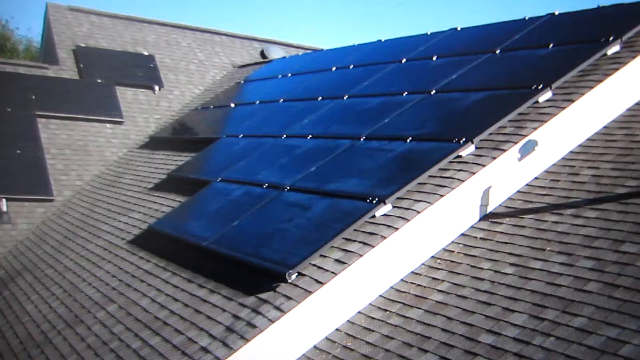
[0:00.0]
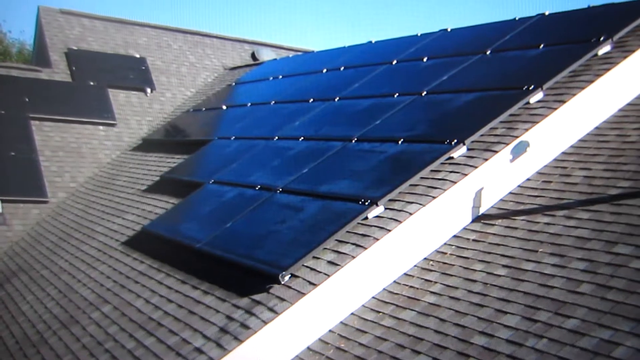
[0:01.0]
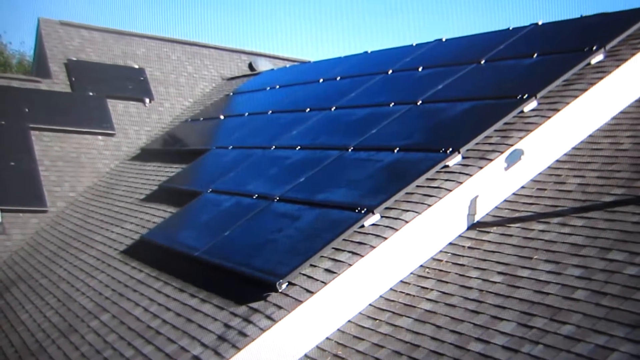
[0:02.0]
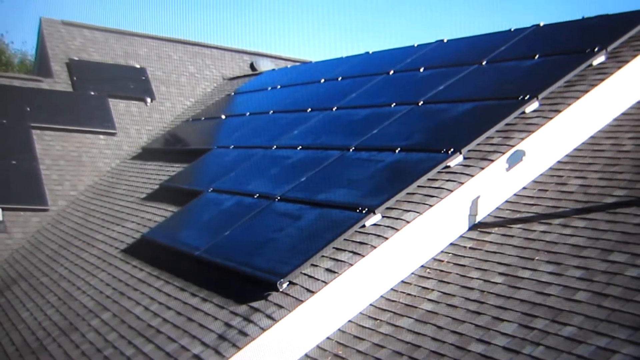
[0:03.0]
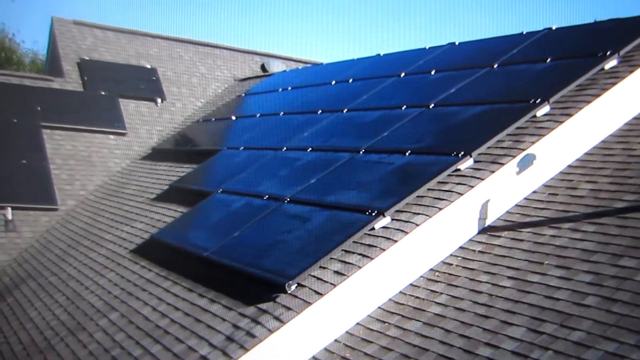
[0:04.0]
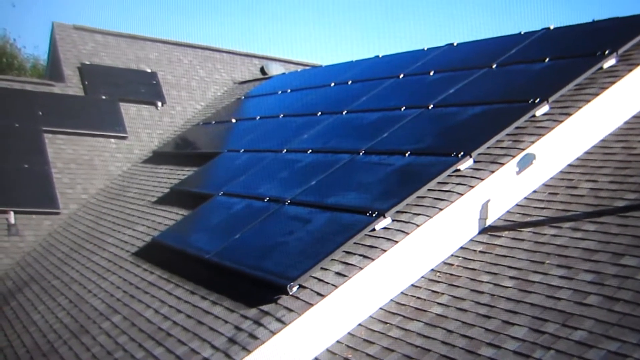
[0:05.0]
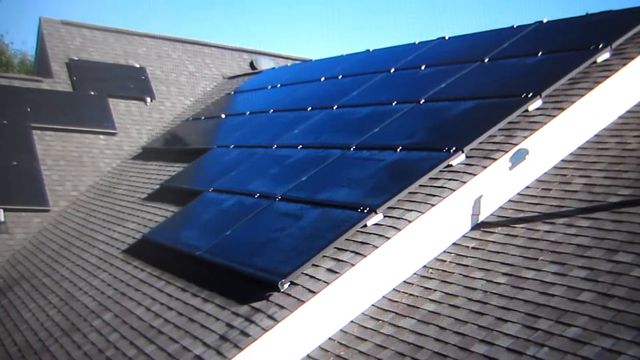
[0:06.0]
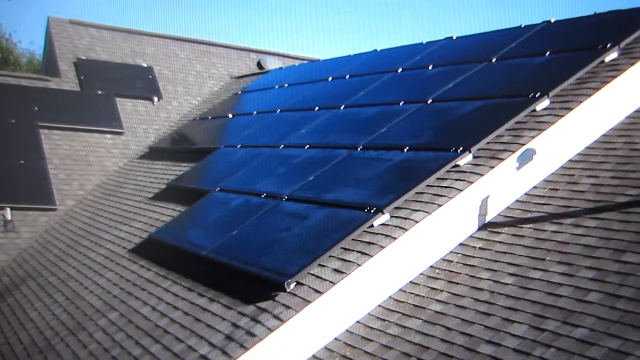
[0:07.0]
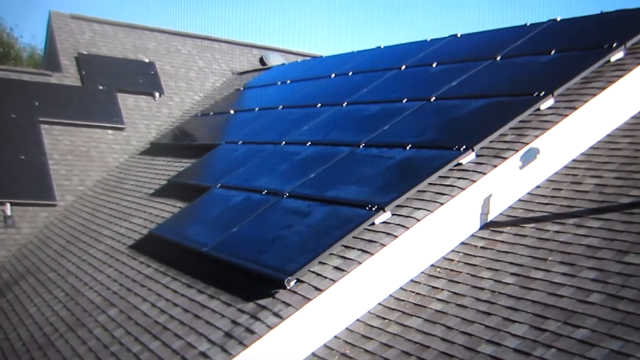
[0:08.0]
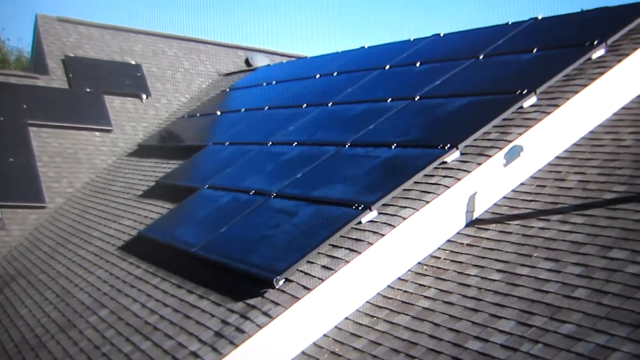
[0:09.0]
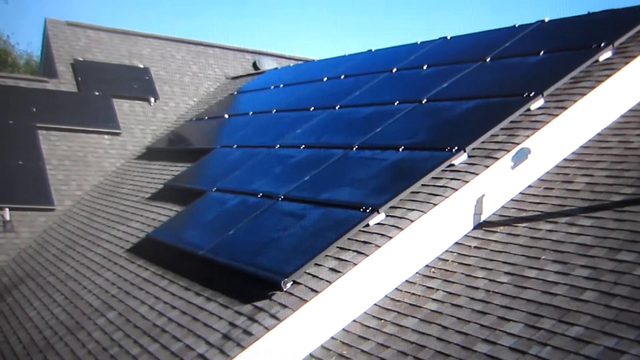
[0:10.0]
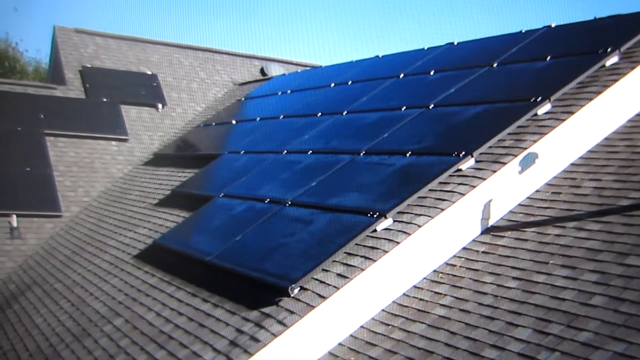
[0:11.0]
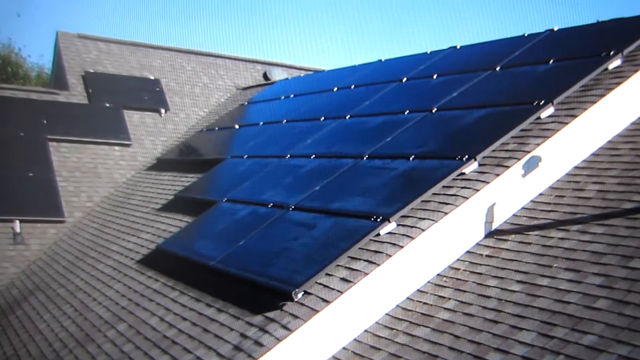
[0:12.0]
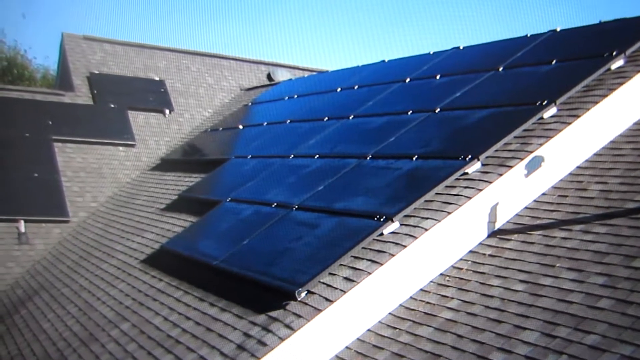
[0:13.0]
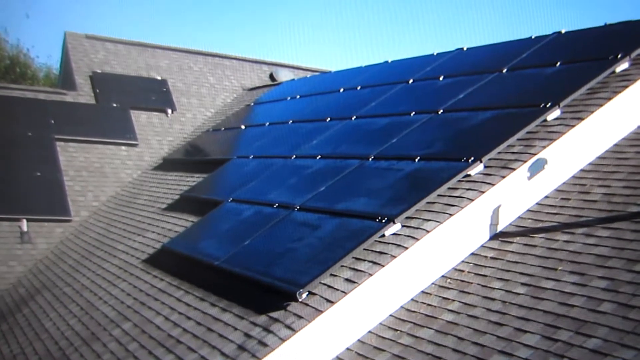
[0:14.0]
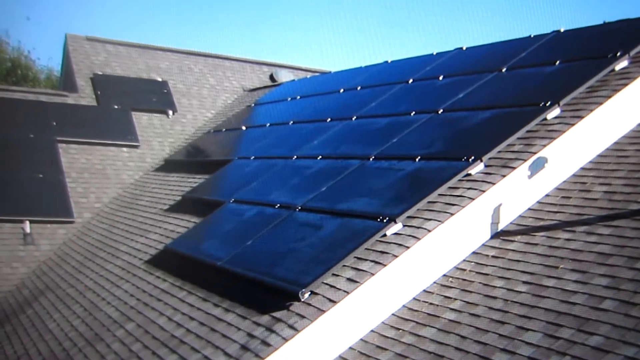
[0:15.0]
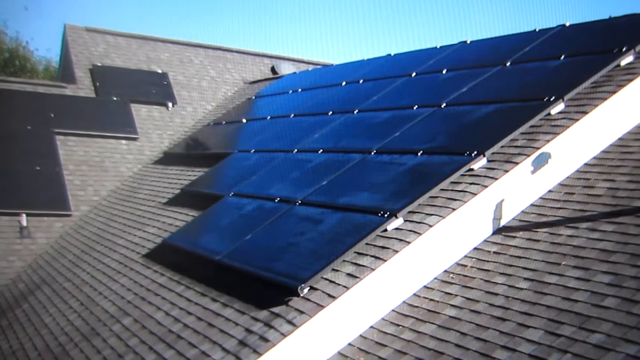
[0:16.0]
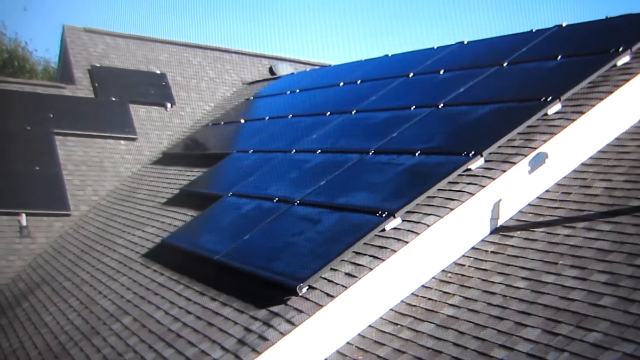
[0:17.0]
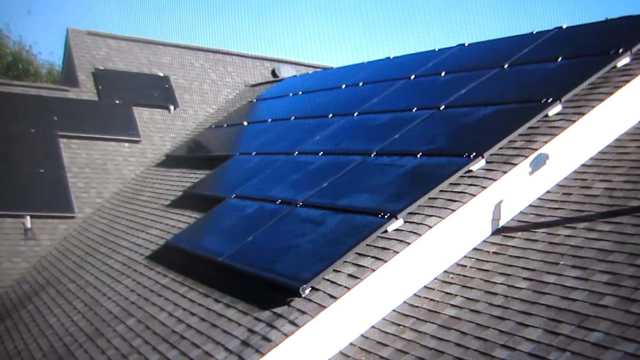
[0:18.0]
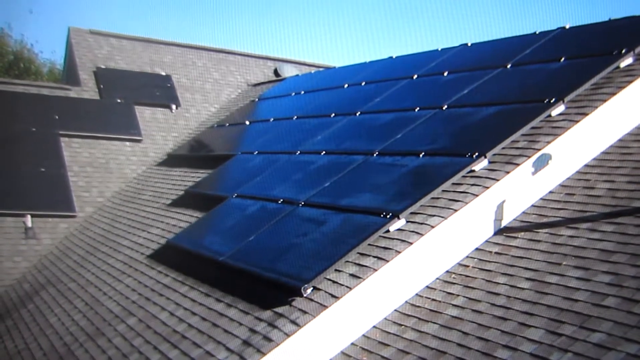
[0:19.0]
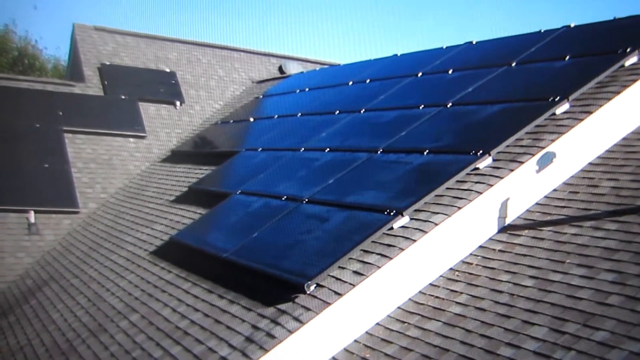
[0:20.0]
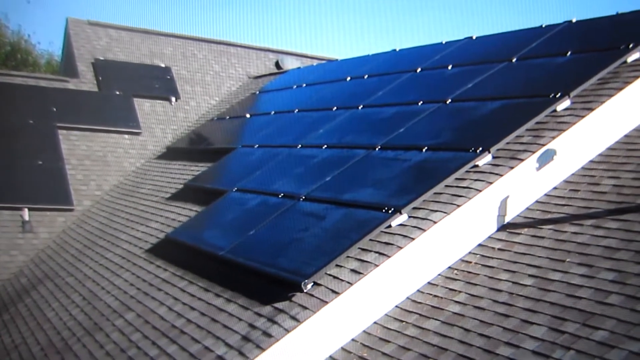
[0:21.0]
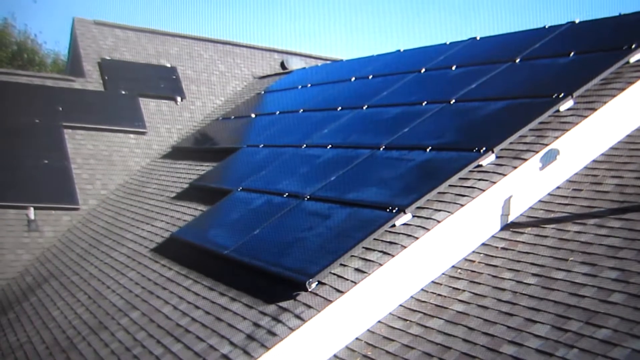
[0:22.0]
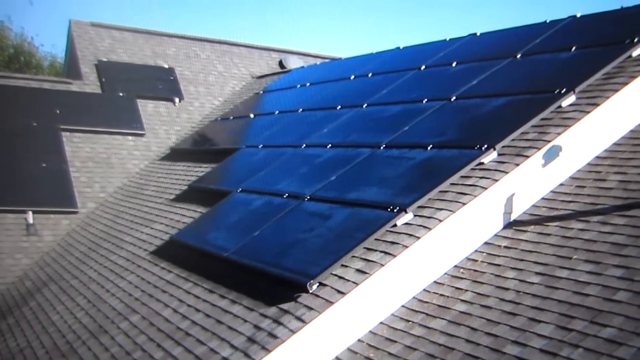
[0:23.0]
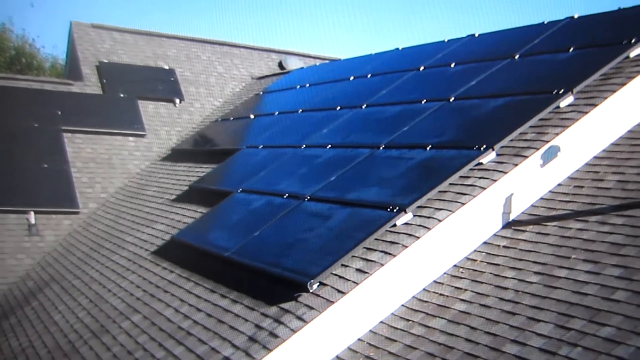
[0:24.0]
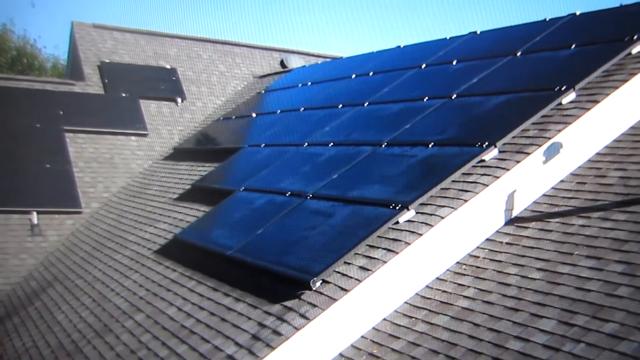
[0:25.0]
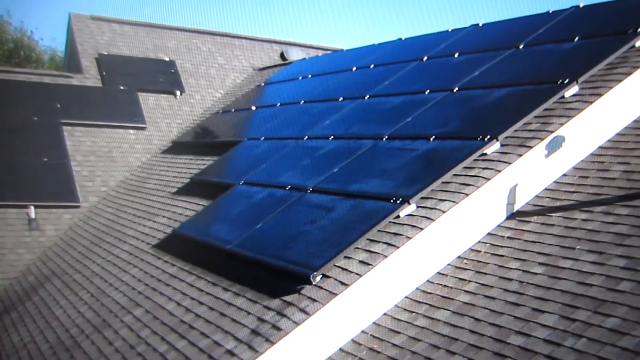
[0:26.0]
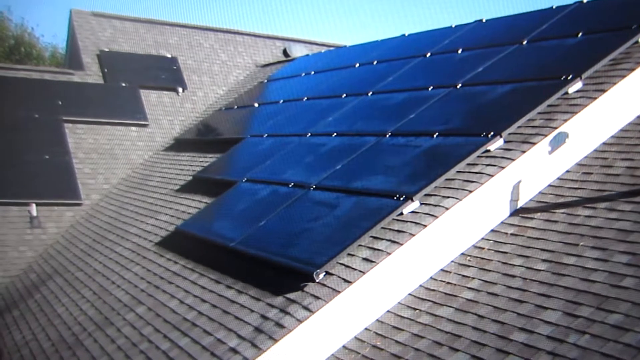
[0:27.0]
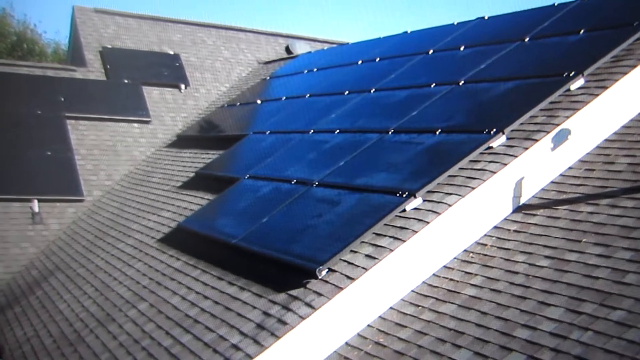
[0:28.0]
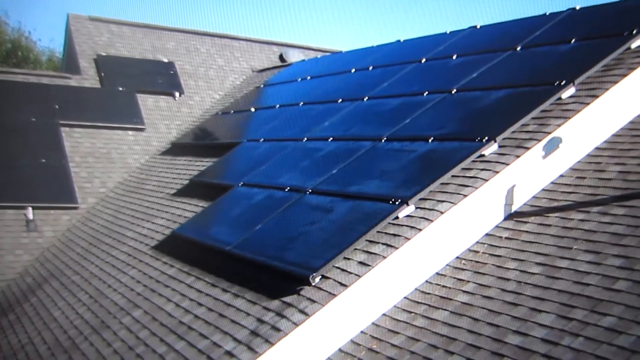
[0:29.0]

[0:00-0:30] The roof of a house has solar panels on top of it. The roof is gray and shingled, with little shingles on it. Three sections of the roof are visible. The middle section holds 17 solar panels. The section to the left has no solar panels that can be seen. The section to the right goes up a little higher and is slanted up towards the sky; it holds seven solar panels in an oddly shaped arrangement: three, then two above them, then one to the side and one on top of that, almost like the snake in the old phone game Snake.